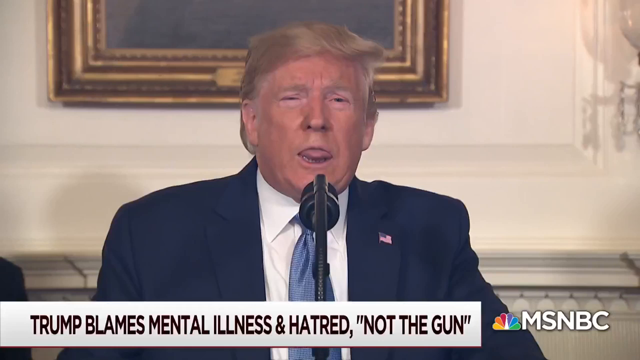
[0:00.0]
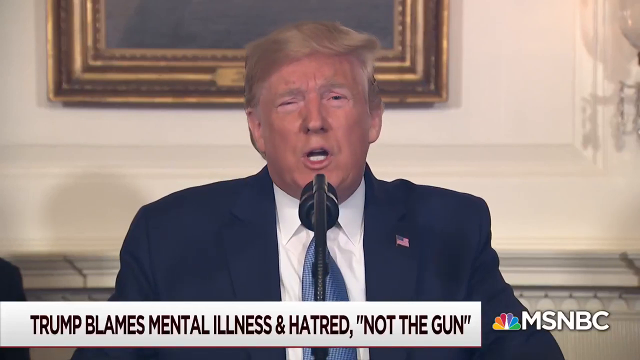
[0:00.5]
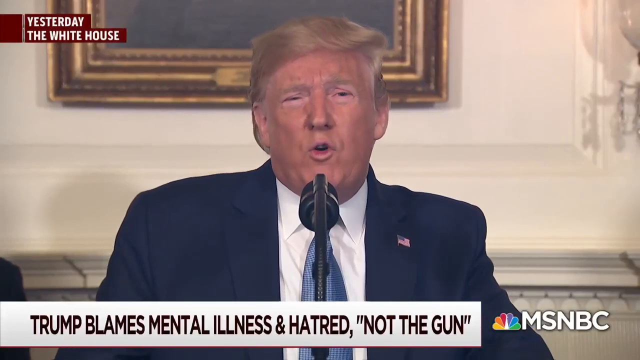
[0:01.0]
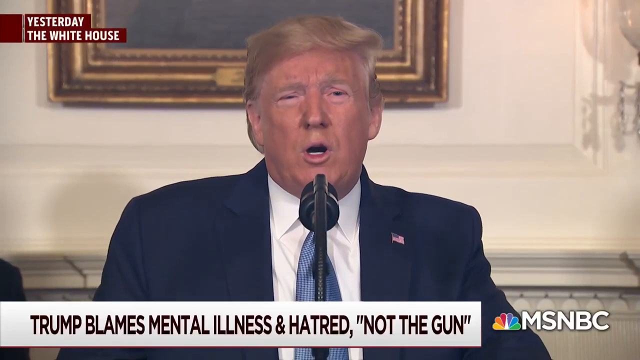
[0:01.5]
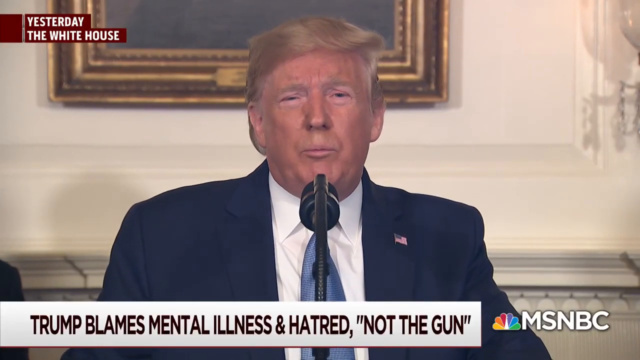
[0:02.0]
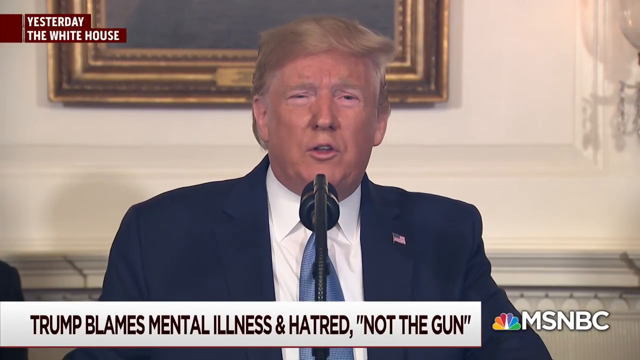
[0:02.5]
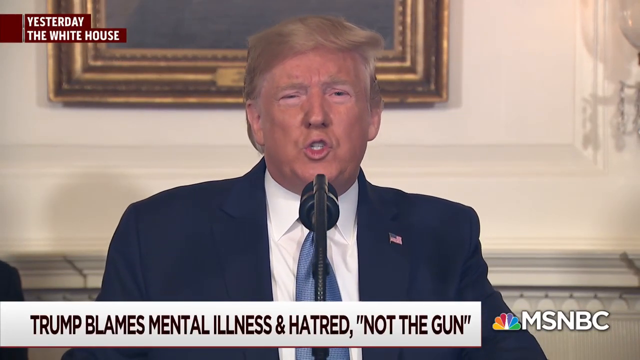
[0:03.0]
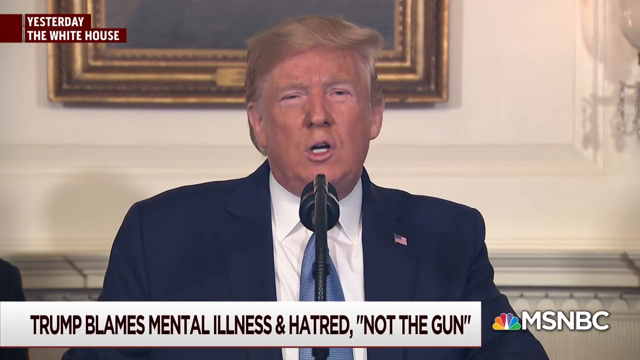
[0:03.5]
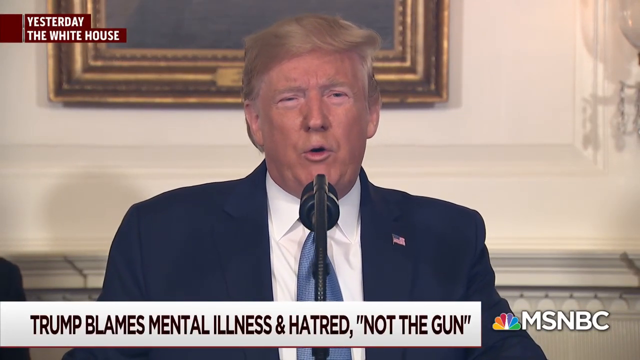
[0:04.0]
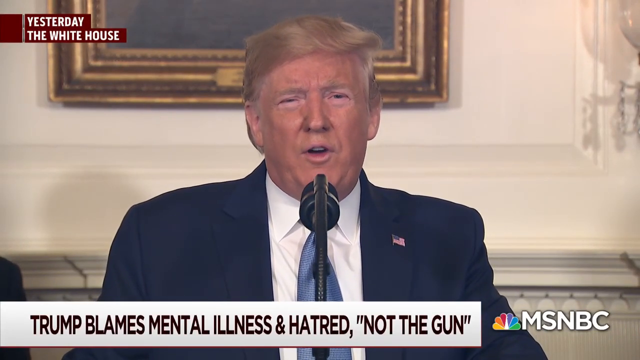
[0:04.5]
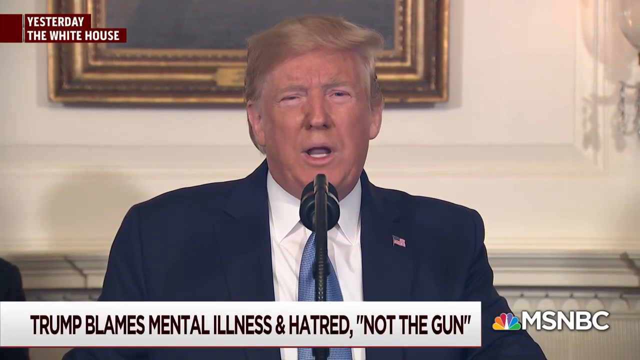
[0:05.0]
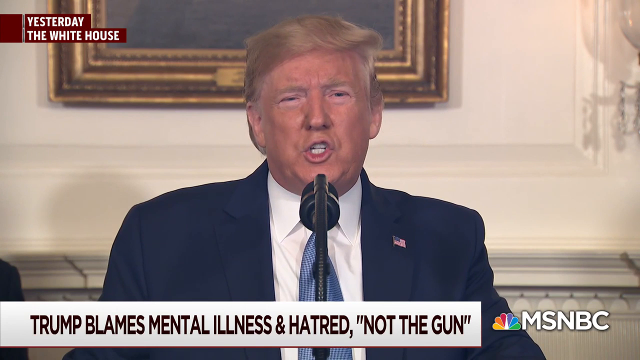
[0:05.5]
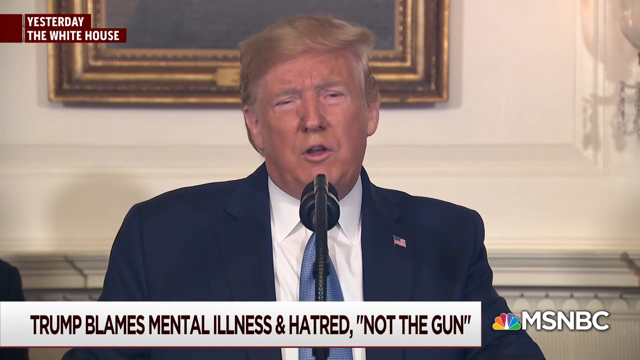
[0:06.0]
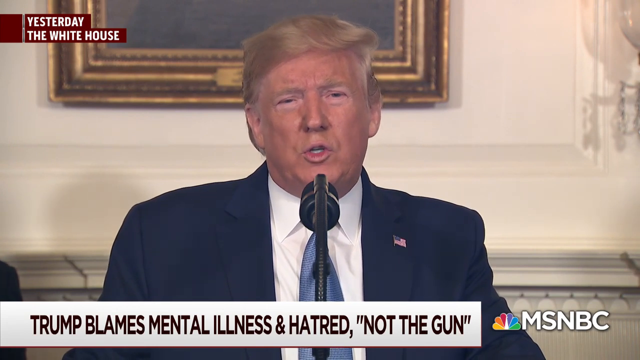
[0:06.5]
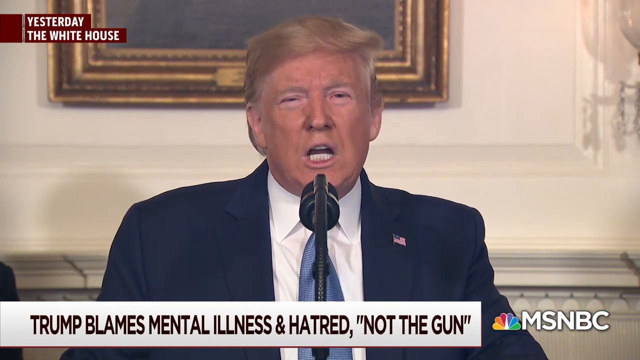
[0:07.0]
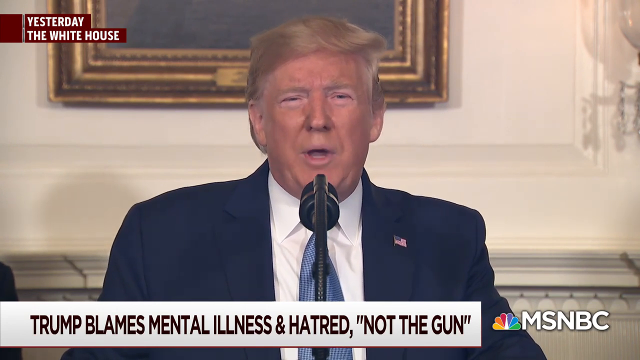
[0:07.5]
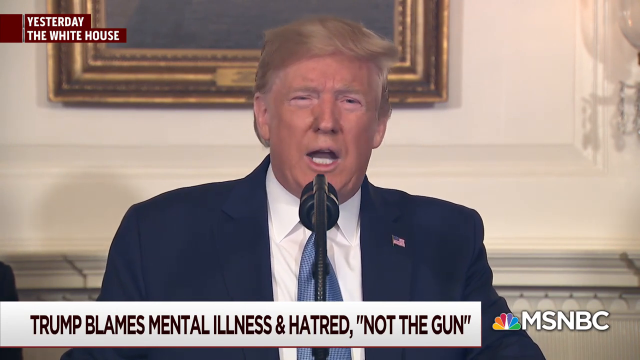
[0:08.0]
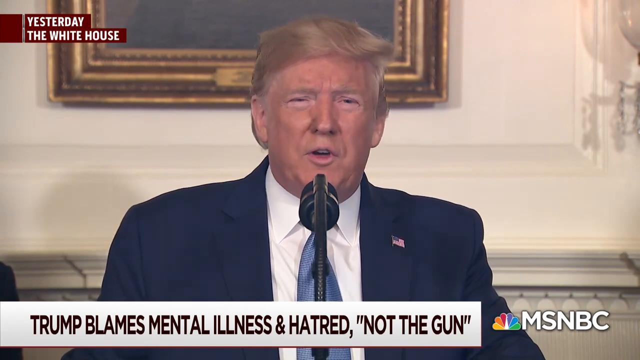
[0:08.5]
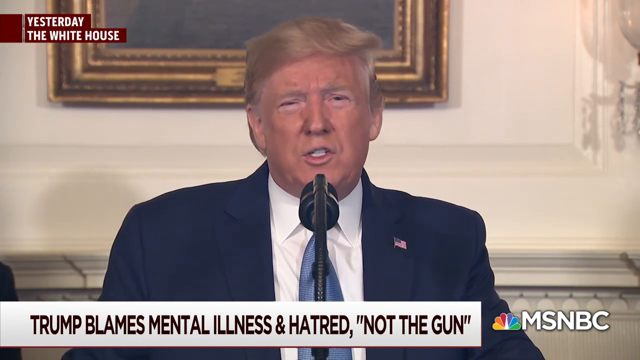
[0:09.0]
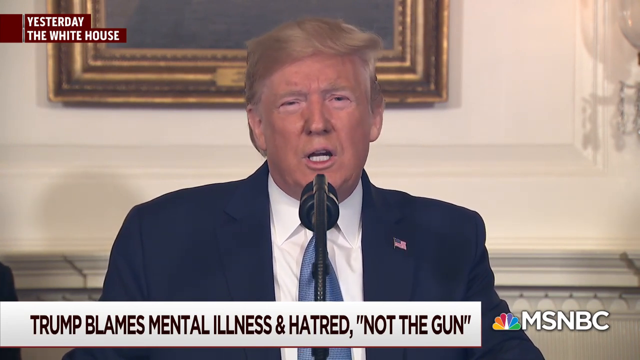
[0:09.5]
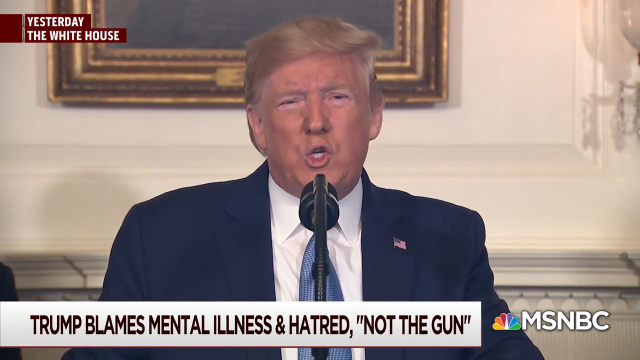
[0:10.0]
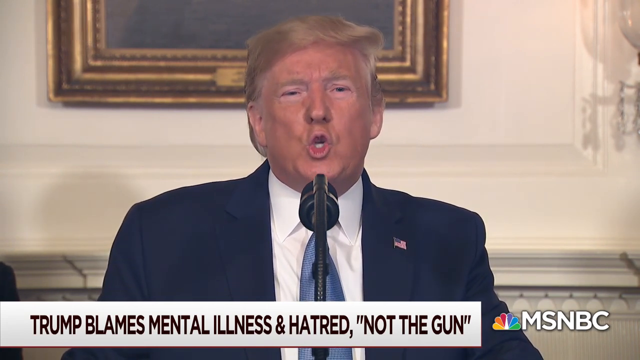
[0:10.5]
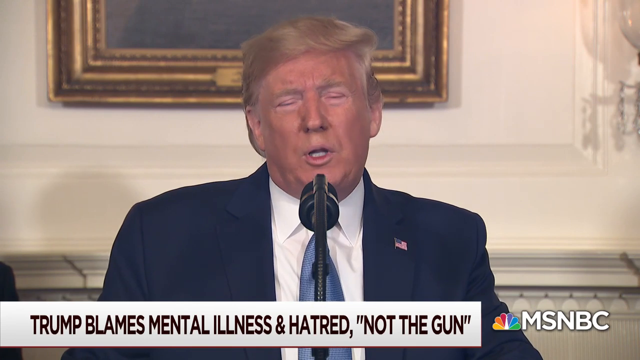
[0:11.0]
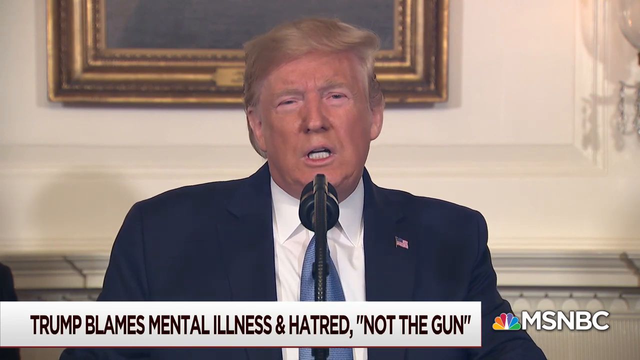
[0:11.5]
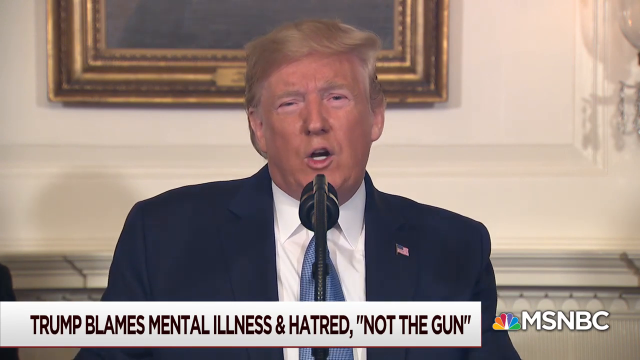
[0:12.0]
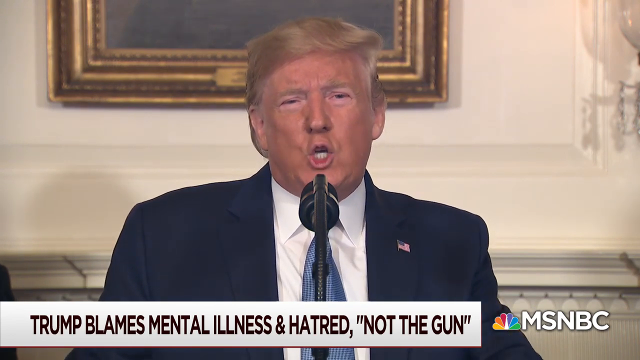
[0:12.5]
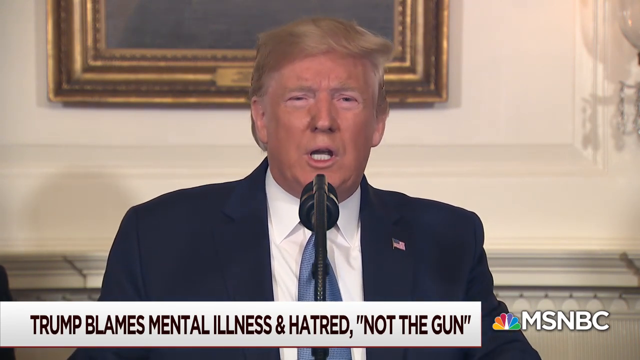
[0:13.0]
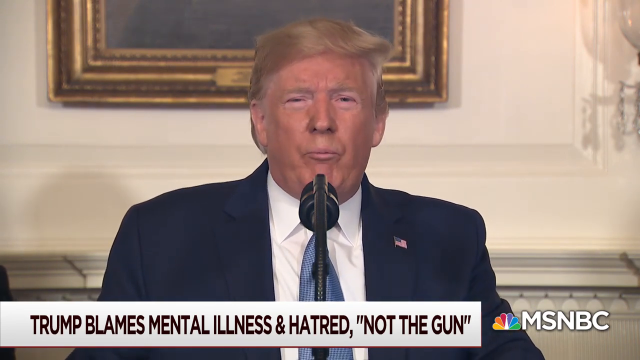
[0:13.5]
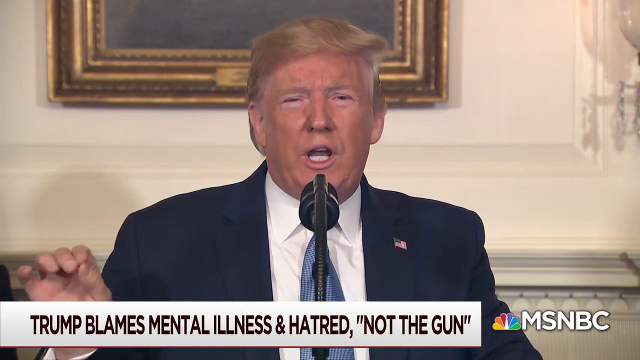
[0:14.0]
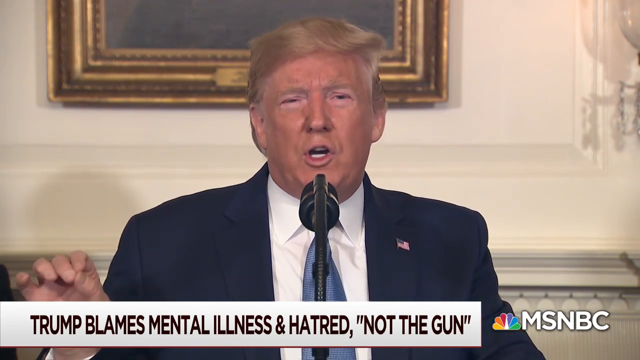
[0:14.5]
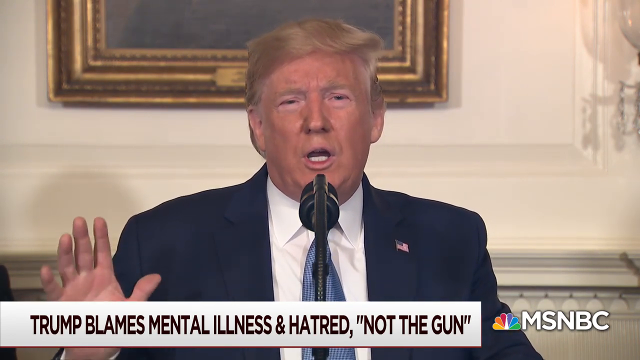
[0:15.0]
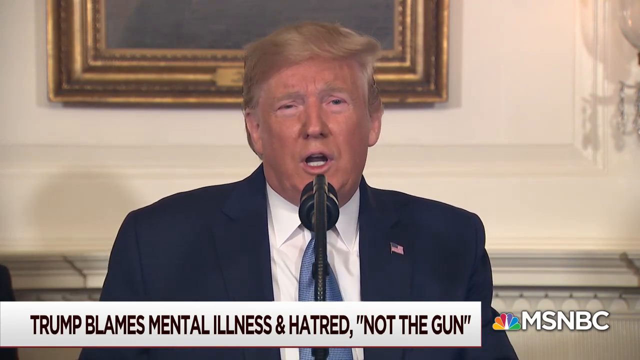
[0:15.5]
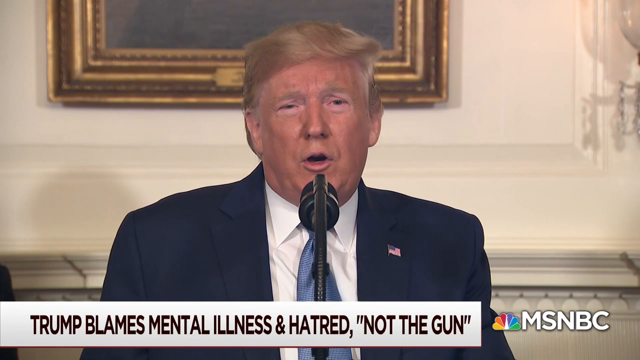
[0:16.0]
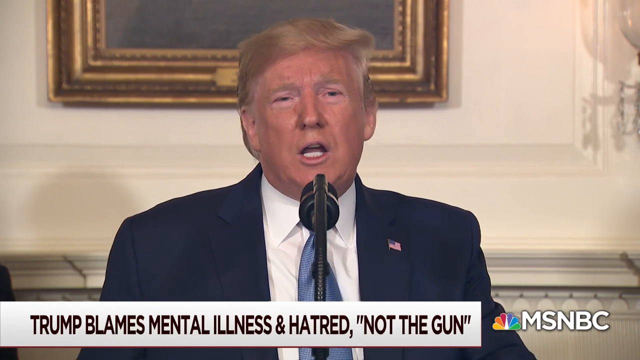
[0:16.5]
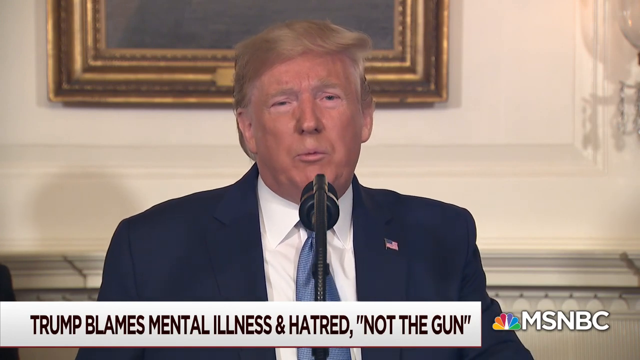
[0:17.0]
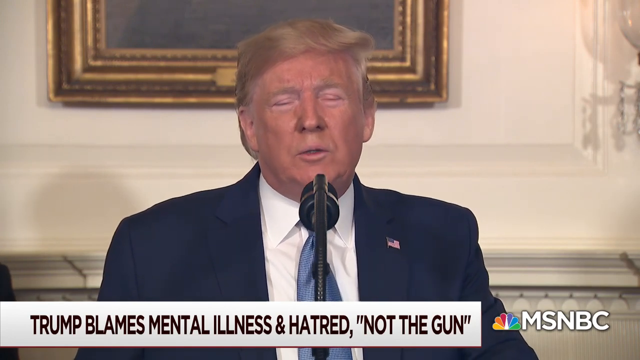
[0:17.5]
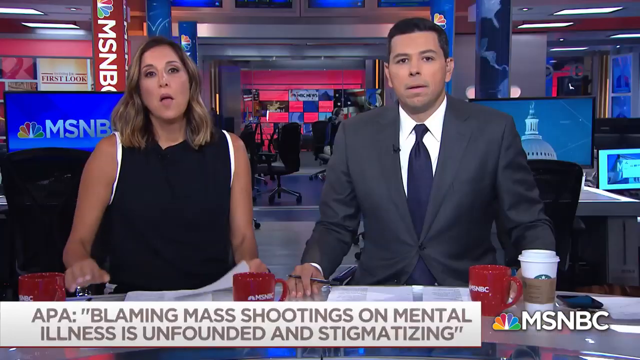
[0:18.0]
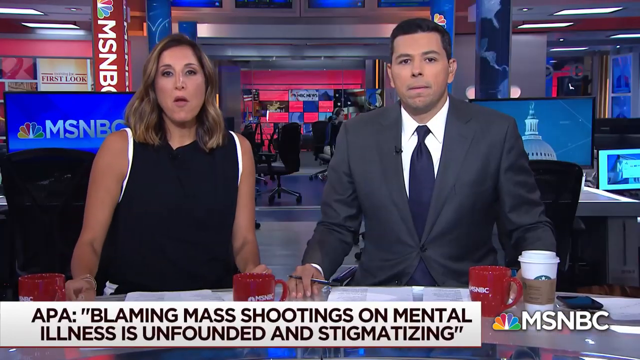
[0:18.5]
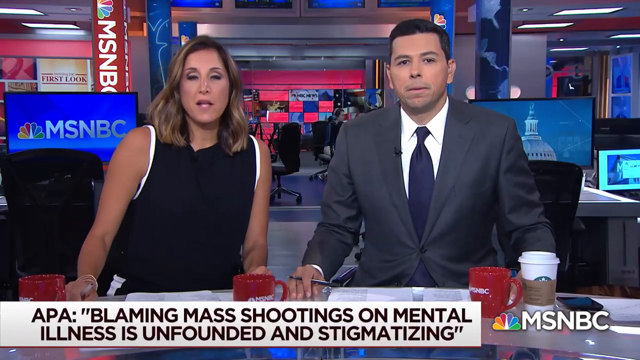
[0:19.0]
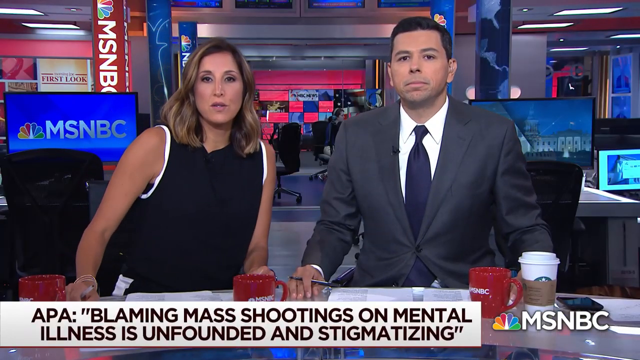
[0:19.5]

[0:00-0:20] President Donald Trump talks to the press. The message presented is that Trump blames mental illness and hatred, not the gun.